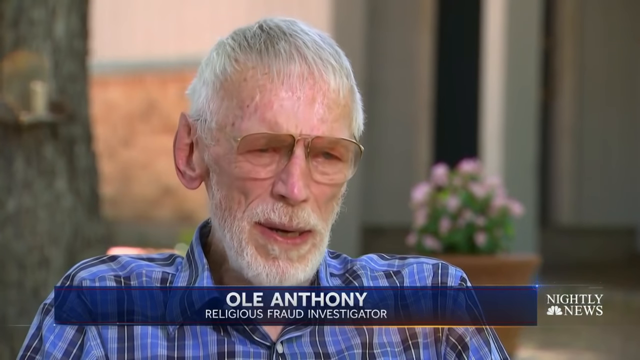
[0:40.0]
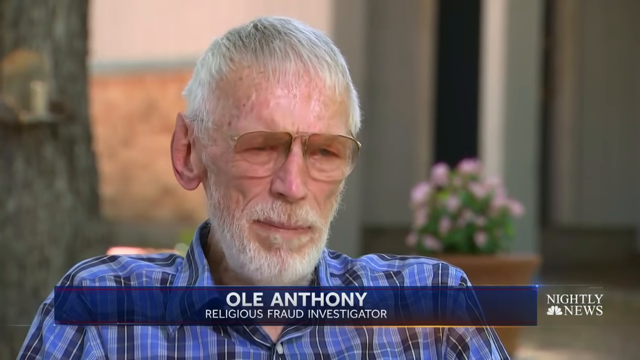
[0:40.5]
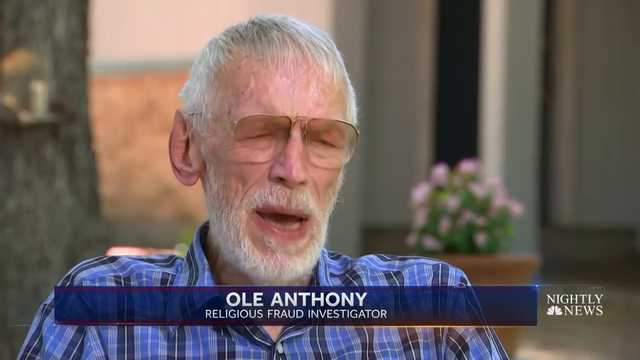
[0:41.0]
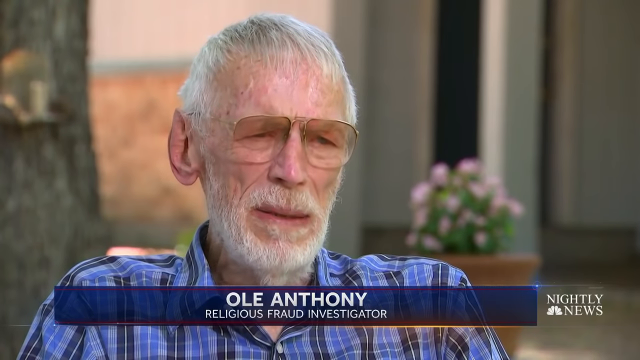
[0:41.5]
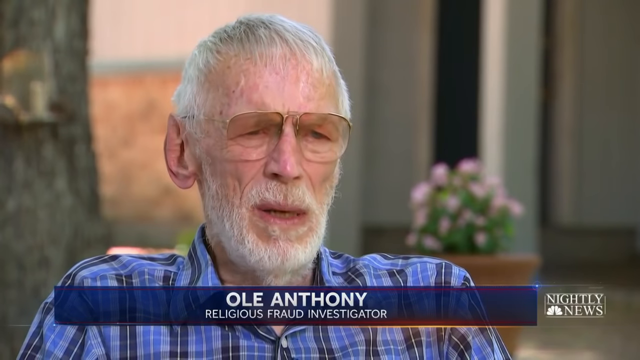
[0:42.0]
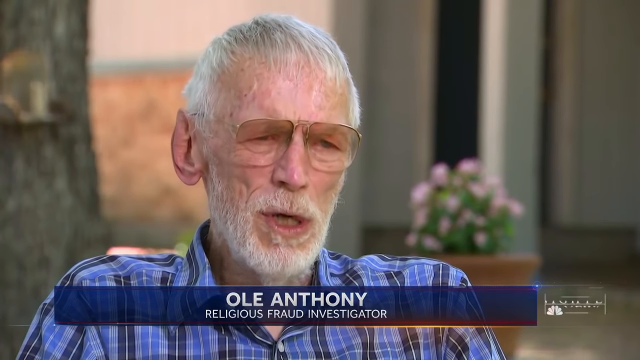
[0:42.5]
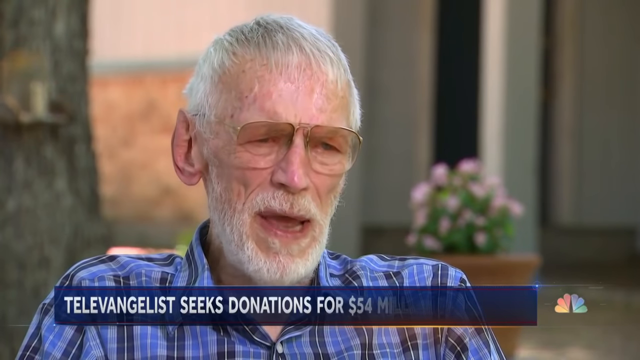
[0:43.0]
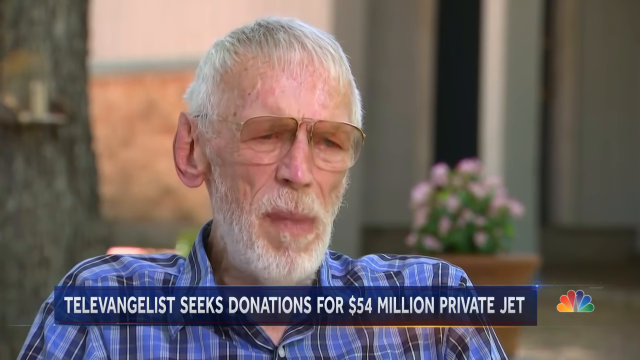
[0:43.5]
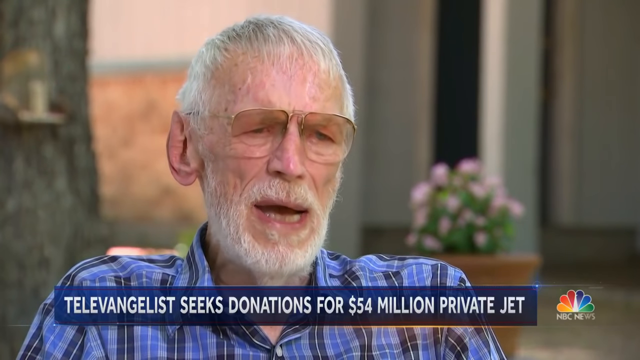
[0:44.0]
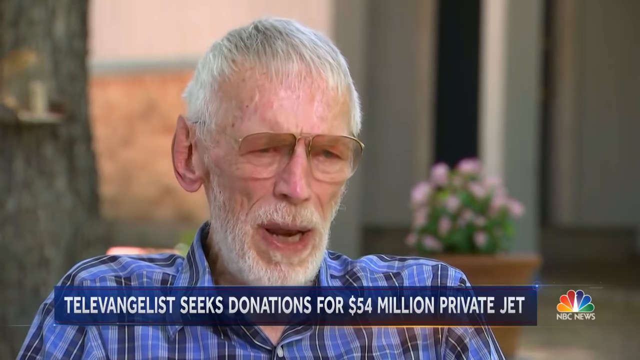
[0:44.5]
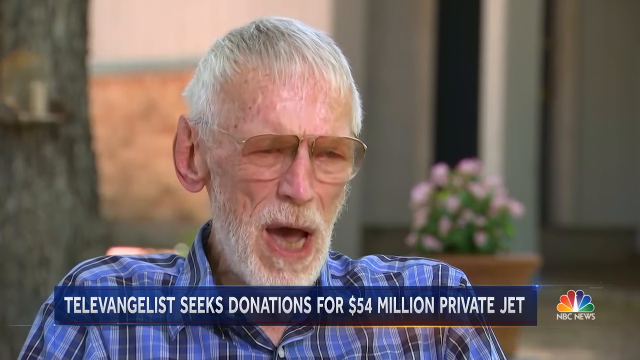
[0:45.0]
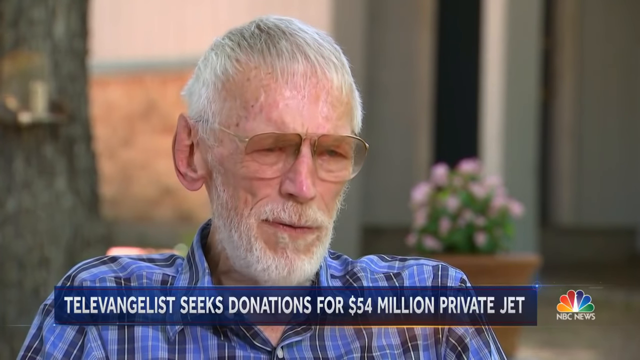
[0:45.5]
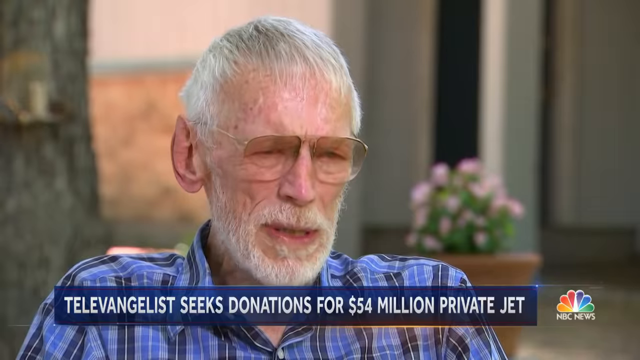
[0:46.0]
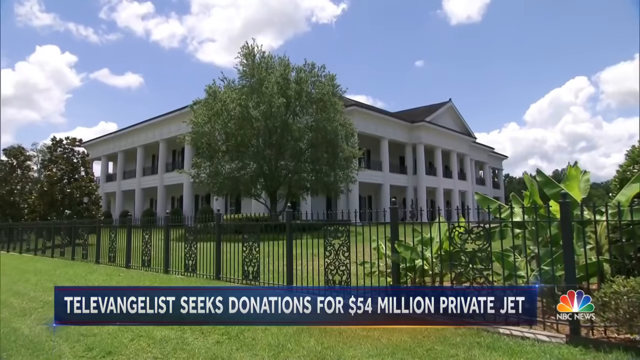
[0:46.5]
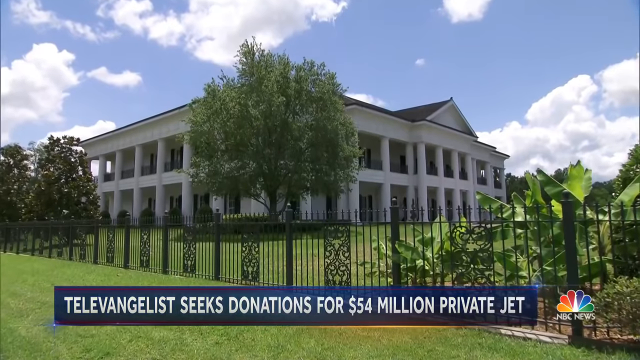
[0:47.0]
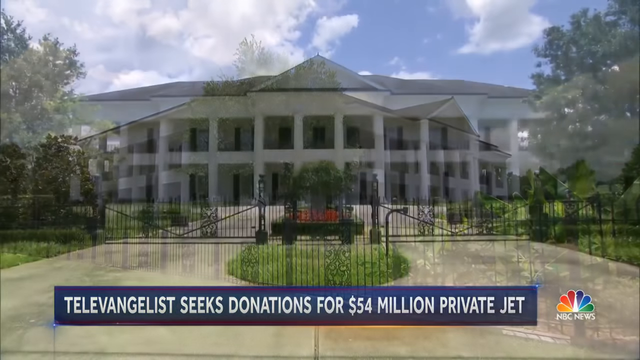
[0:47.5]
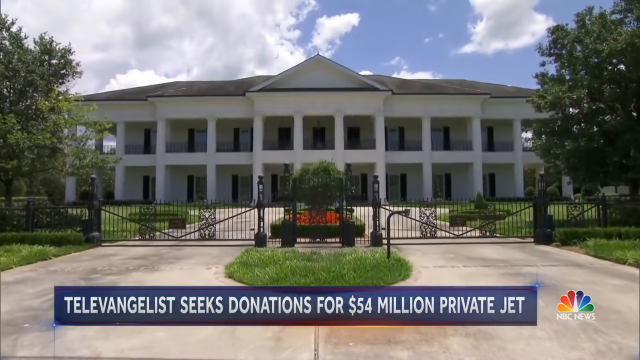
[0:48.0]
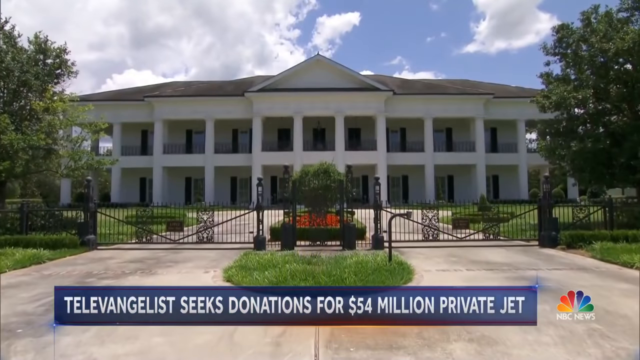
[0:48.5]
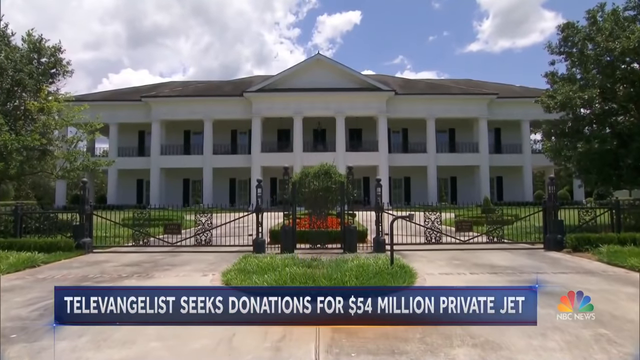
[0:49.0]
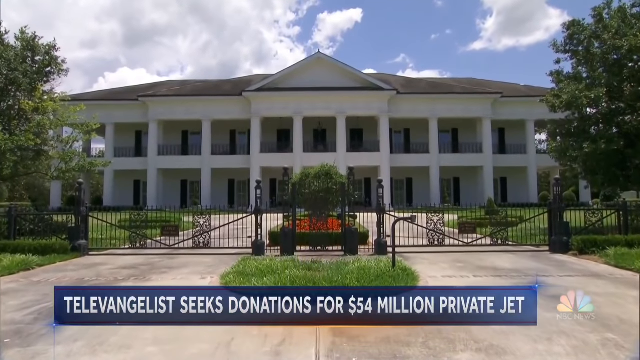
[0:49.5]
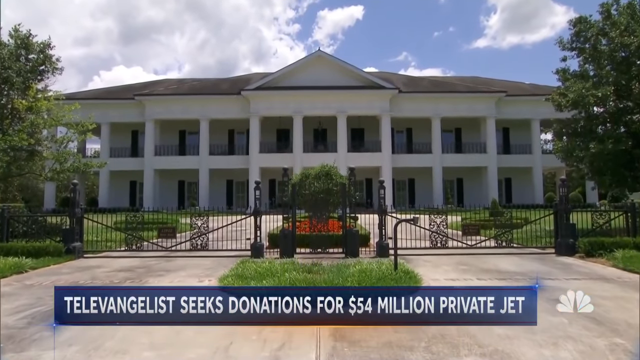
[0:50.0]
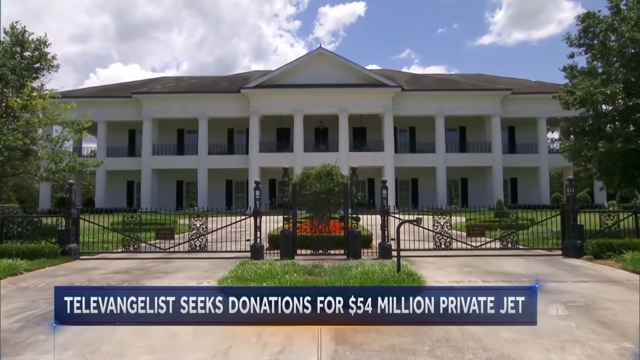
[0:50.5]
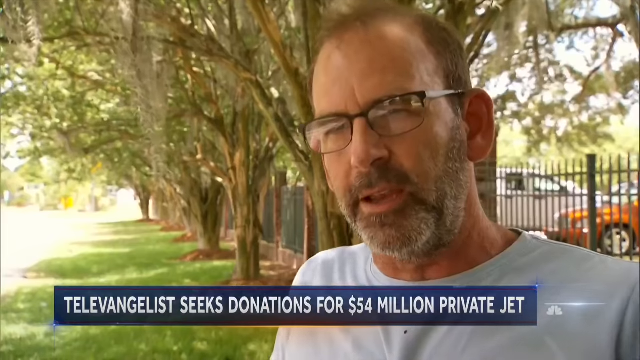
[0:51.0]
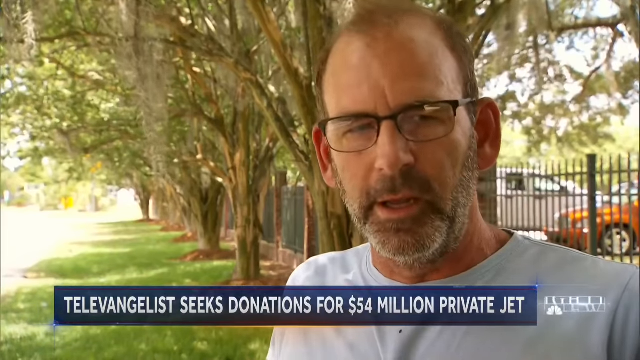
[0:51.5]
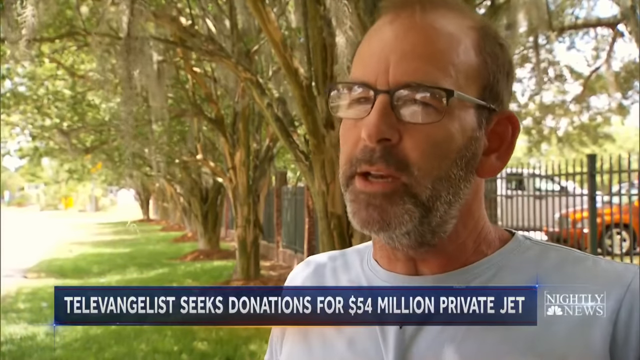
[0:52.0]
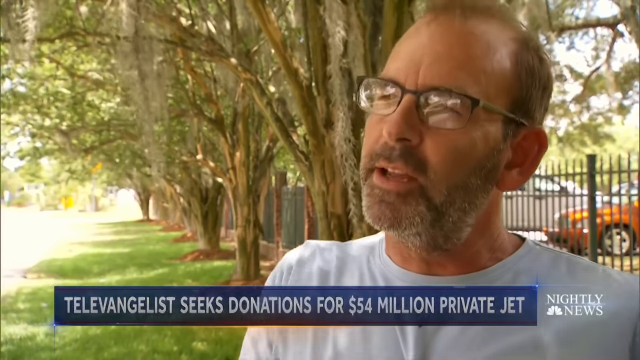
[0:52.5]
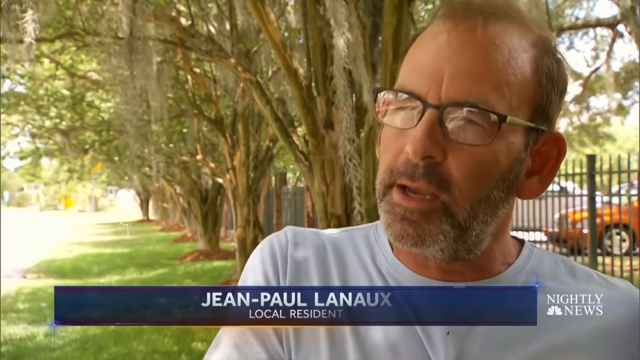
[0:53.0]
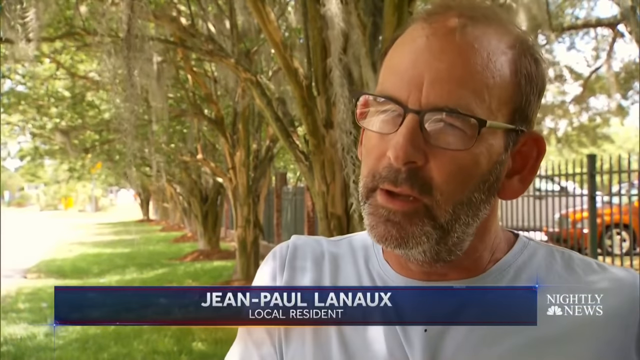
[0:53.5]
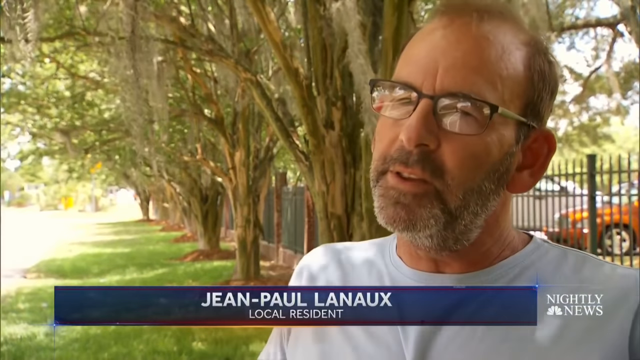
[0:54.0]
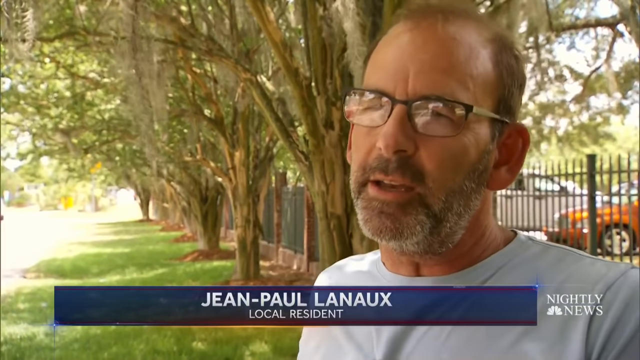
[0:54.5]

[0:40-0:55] The religious fraud investigator, who has a white beard and white hair, speaks. Pictures show the outside of what may be a mansion, possibly where the televangelist lives; the mansion is gated. A man outside in a white t-shirt talks with the reporter. This resident, Jean-Paul, is younger than the other two men in the video, has brown hair and wears glasses, and does not appear amused.